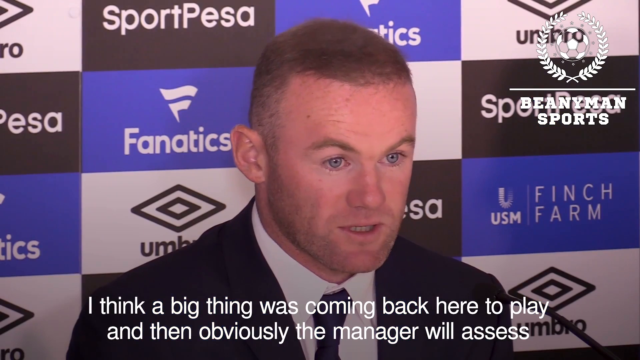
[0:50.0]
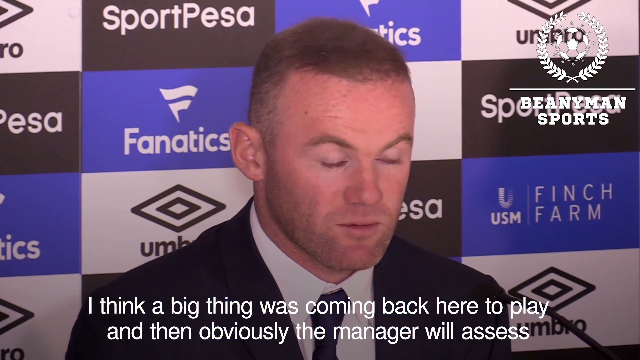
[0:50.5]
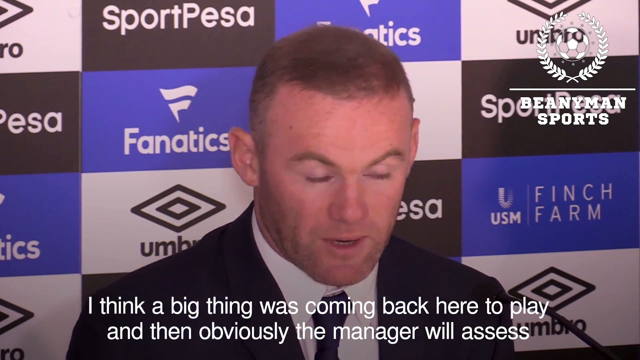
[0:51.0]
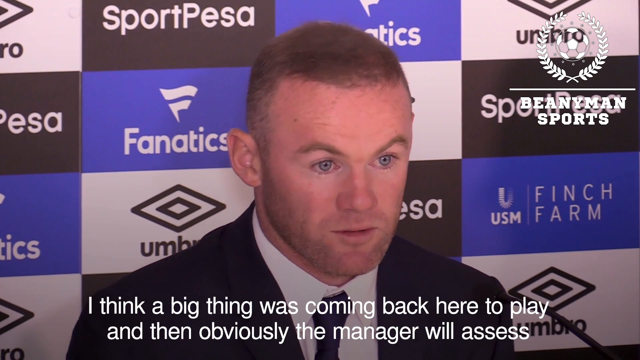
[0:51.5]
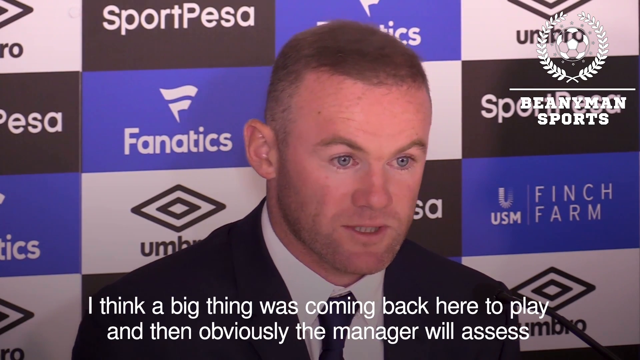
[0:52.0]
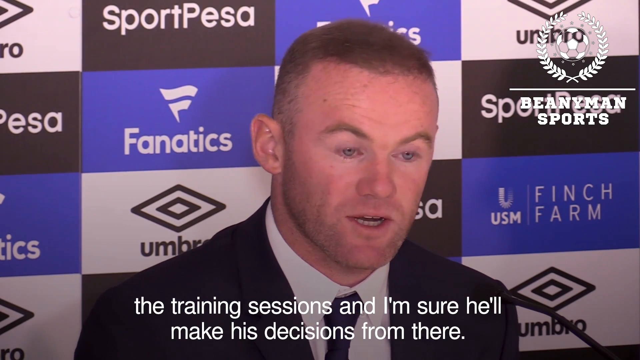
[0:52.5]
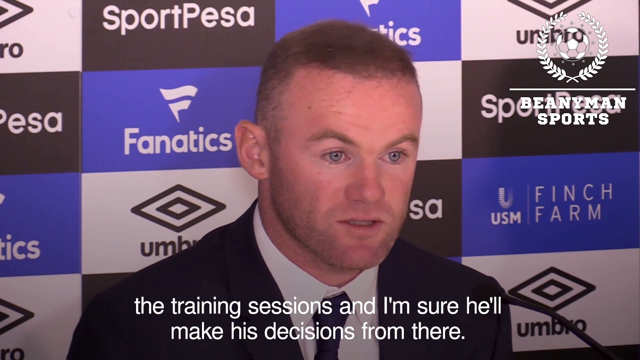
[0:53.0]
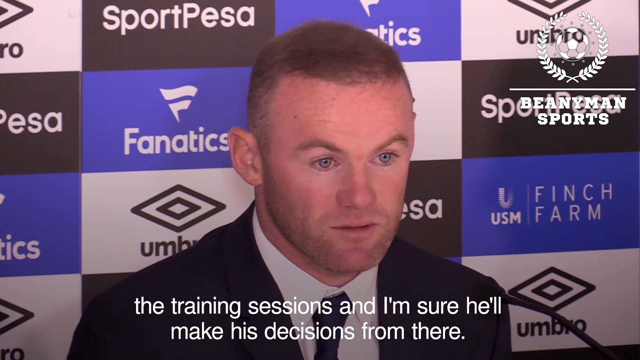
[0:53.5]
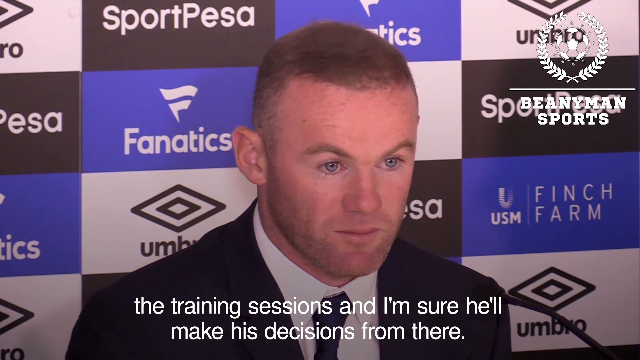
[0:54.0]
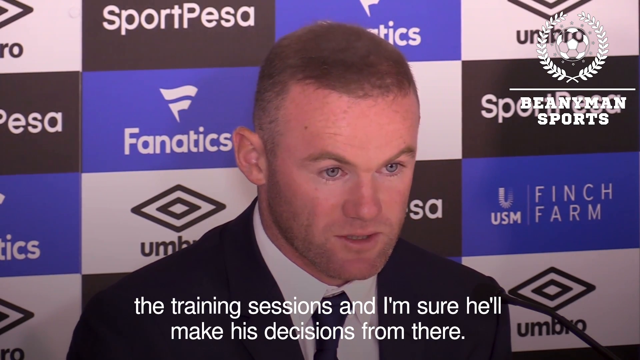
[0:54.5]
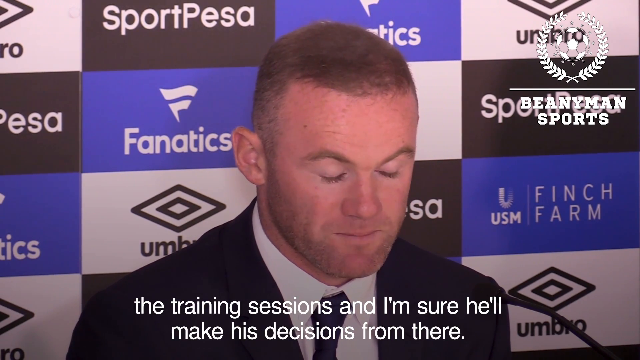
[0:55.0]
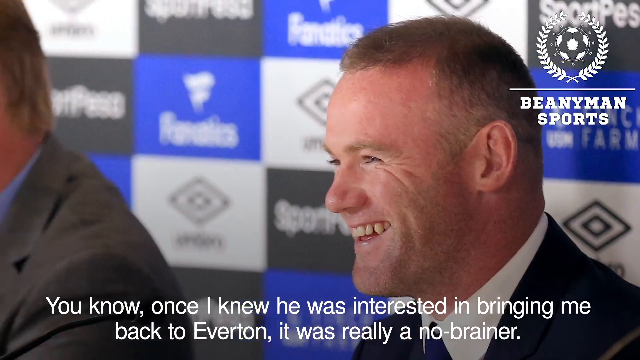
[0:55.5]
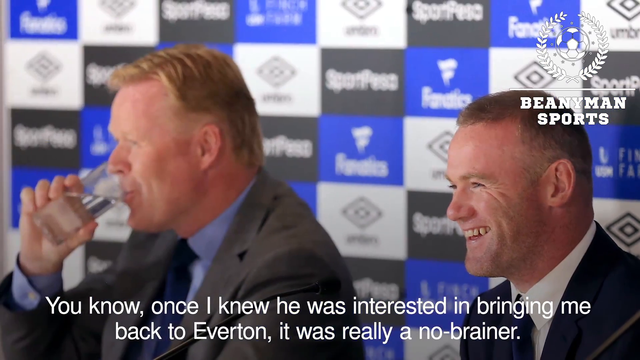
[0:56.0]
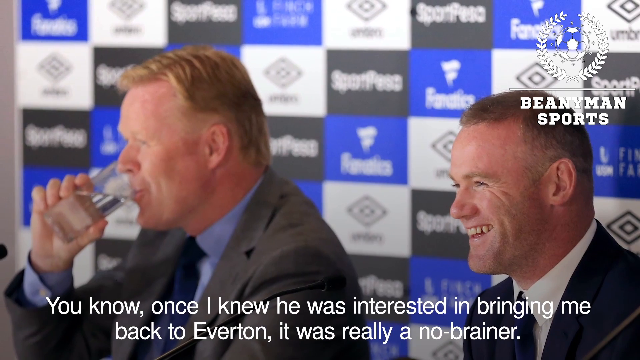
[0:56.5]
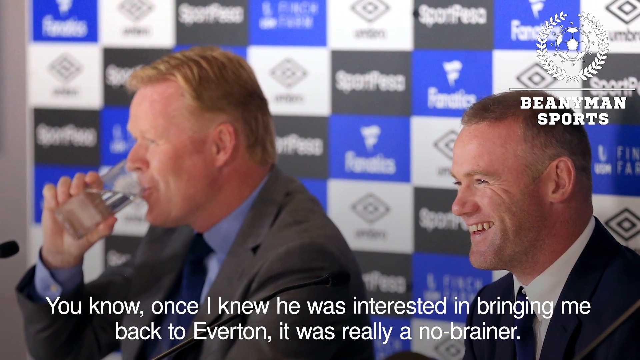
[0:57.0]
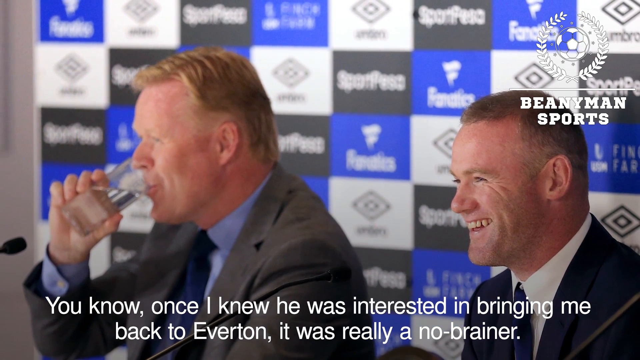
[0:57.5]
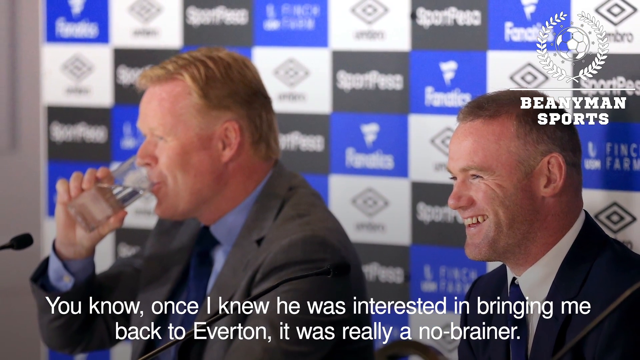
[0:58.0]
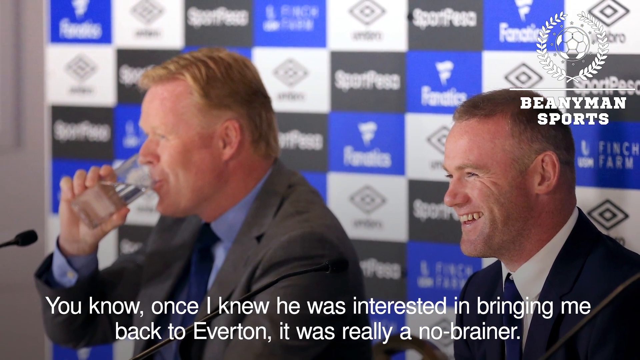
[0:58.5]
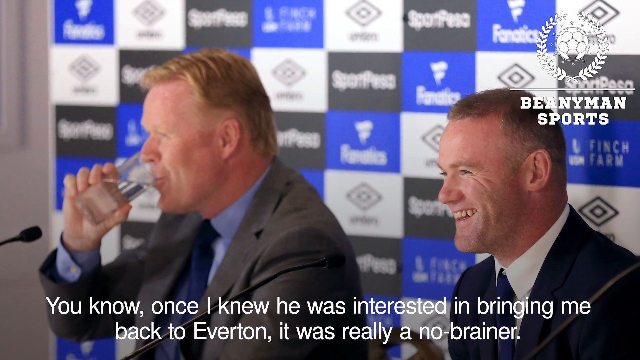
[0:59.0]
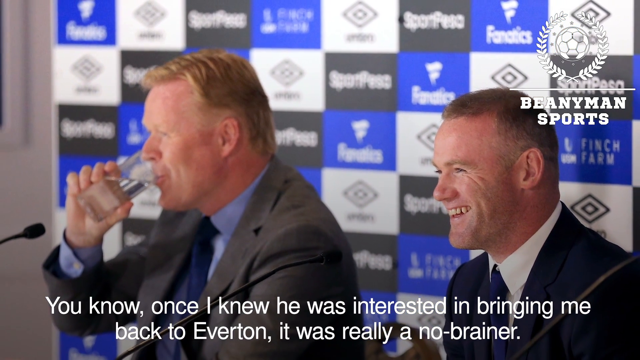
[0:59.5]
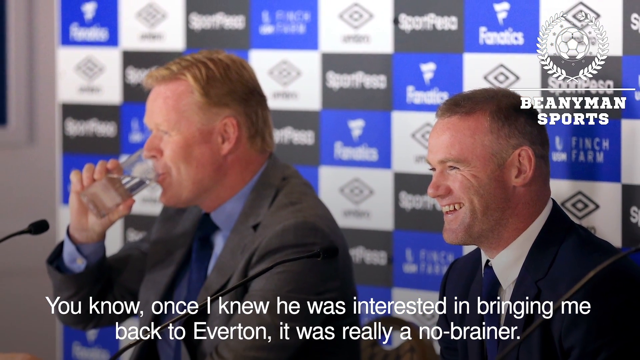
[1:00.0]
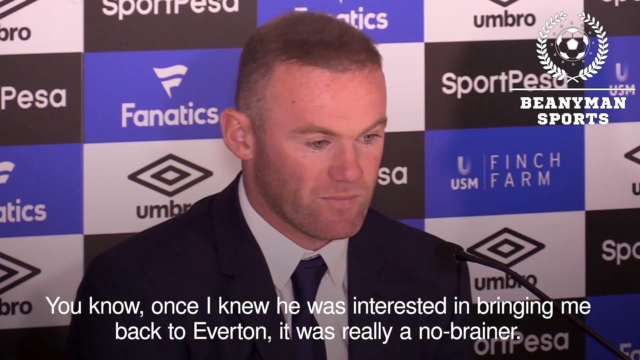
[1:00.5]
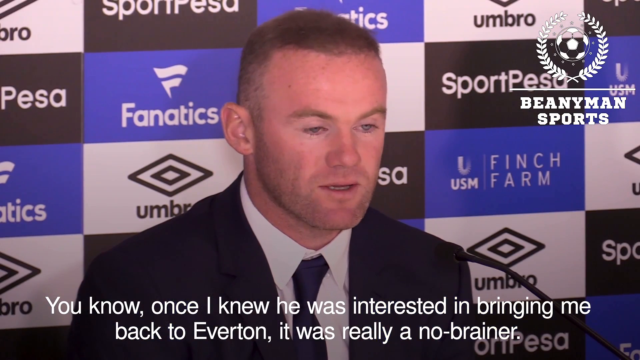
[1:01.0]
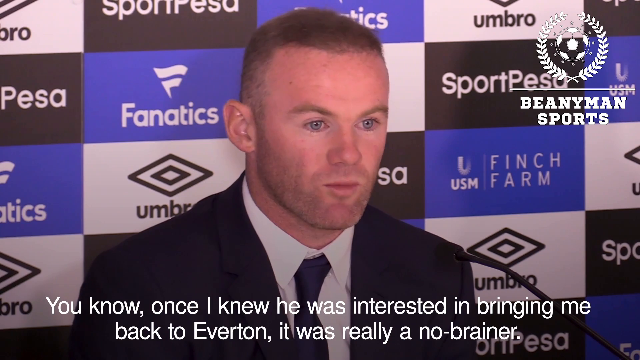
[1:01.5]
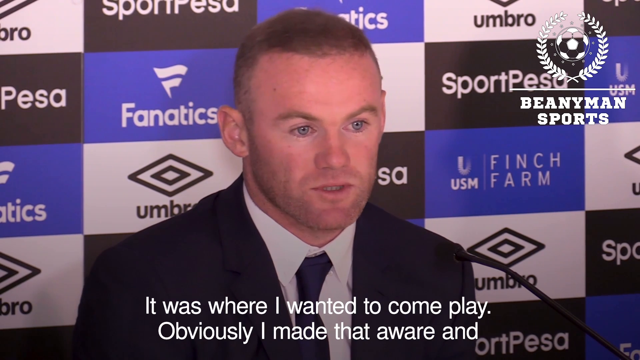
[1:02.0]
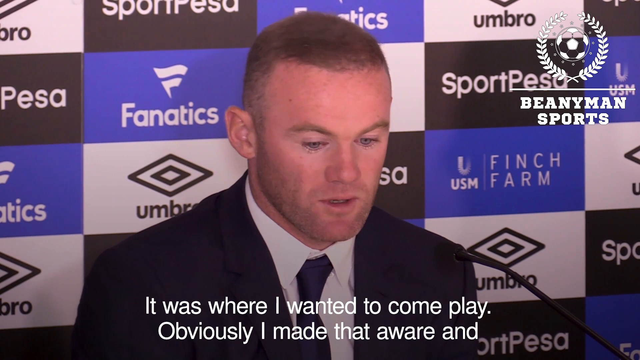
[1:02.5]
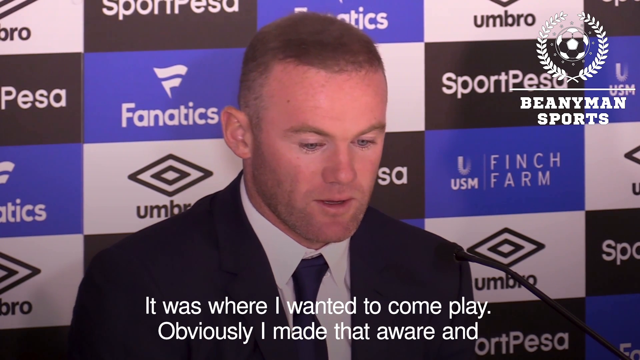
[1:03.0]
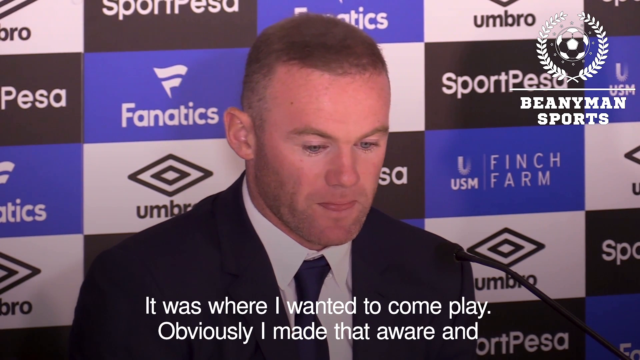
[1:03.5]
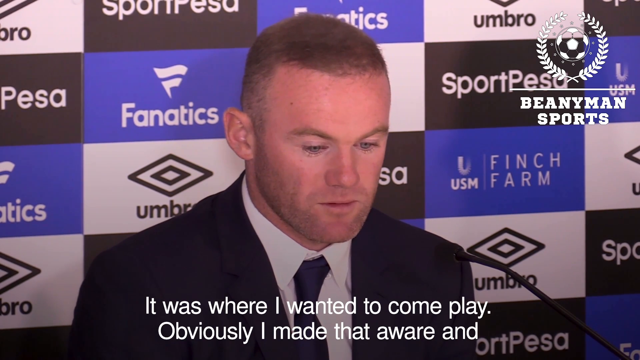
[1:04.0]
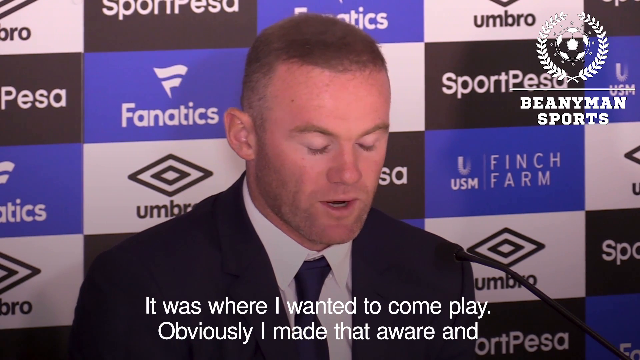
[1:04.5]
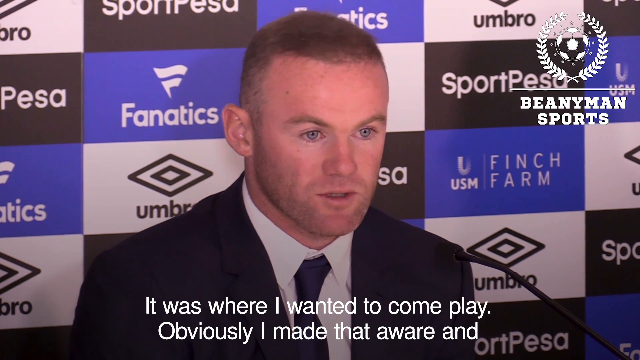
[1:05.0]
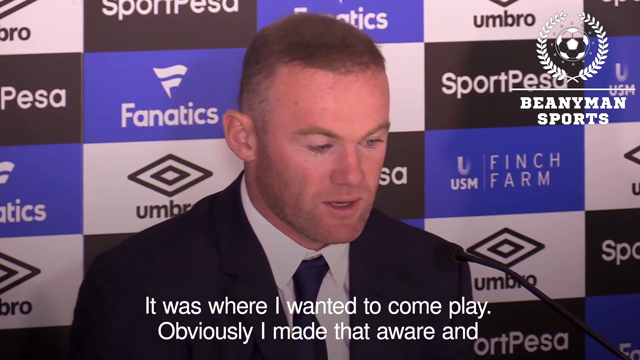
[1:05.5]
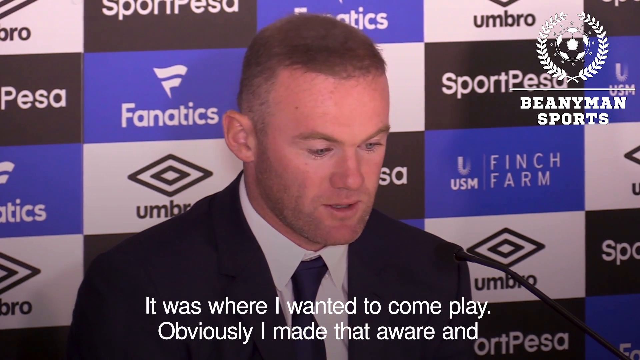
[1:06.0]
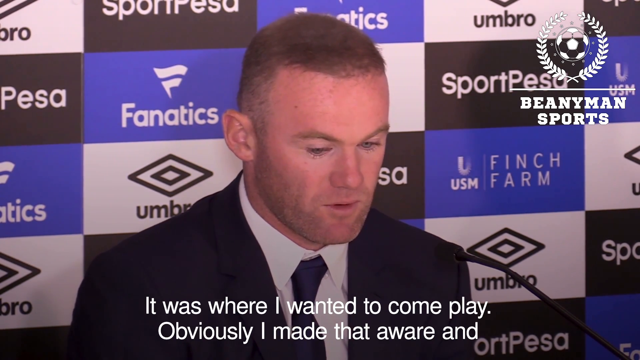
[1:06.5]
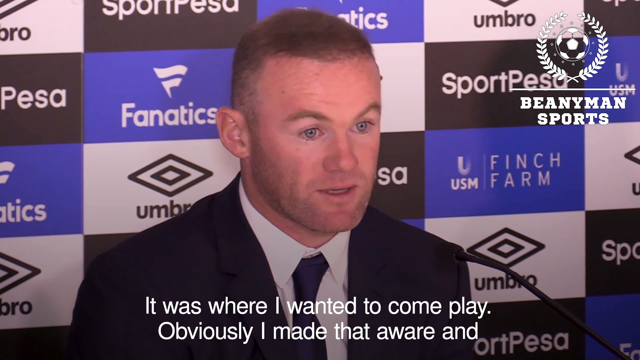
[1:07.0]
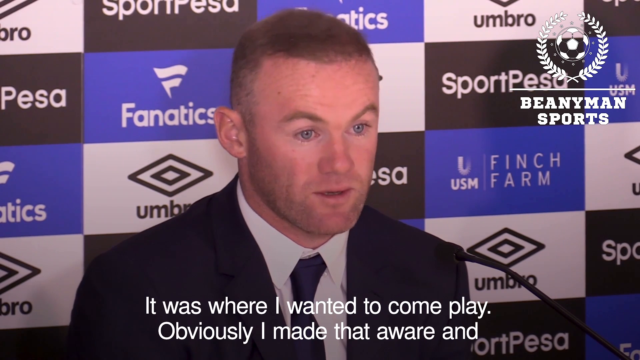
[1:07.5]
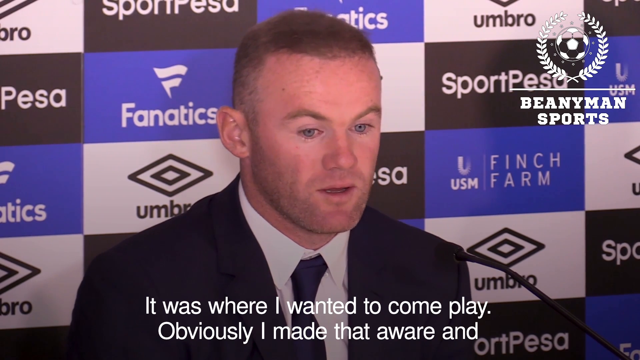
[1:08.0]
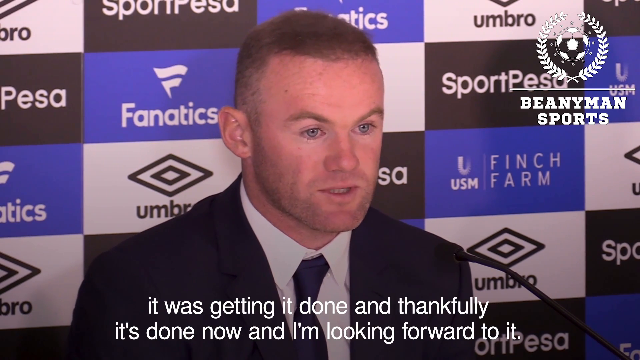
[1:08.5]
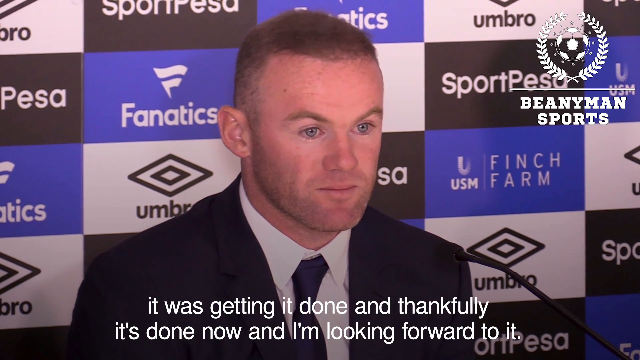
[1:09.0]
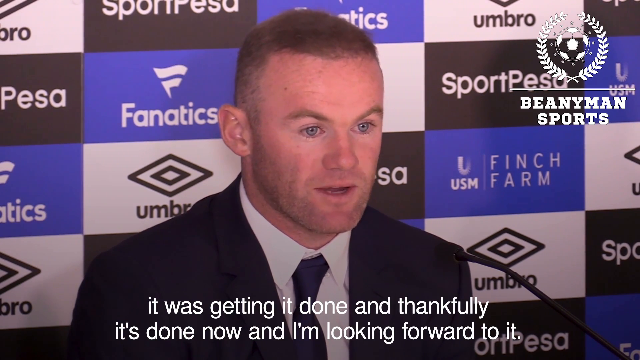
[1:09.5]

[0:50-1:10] Ronnie continues his speech, saying the big thing is coming back here to play, that the manager will be assessing his performance and the training sessions, and that he is sure the manager will make the decision from there. Ronnie is then shown smiling, perhaps answering a reporter's question that may have been funny. The man next to him, also wearing a suit and the one who handed Ronnie the shirt earlier, drinks a glass of water. Ronnie goes on, "once I knew he was interested in bringing me back to Everton, it was a no-brainer. It was where I really wanted to come play. Obviously I made that aware and it was getting it done."